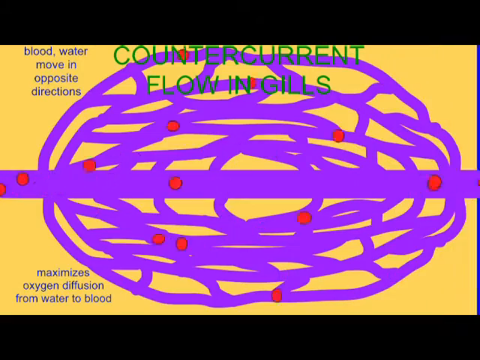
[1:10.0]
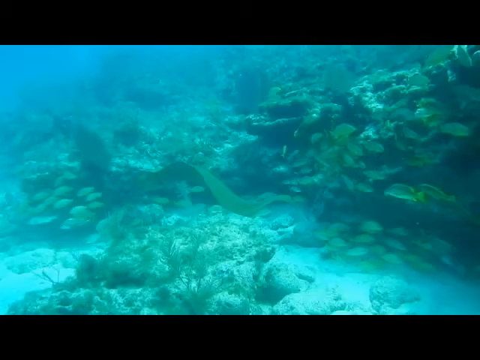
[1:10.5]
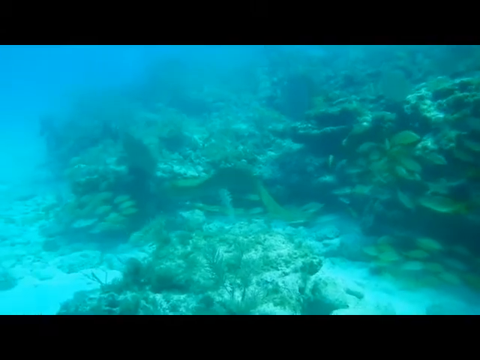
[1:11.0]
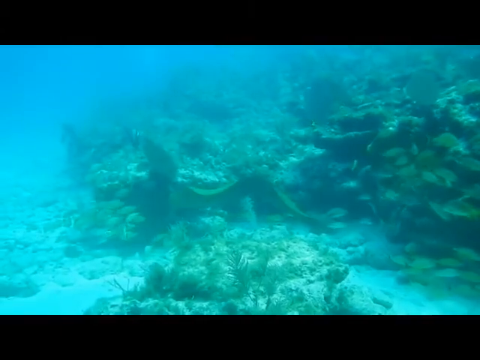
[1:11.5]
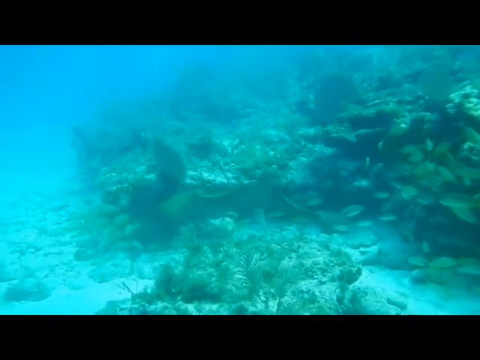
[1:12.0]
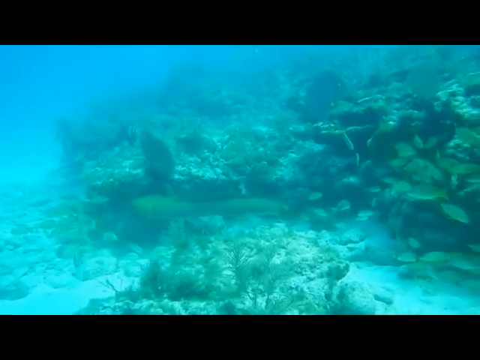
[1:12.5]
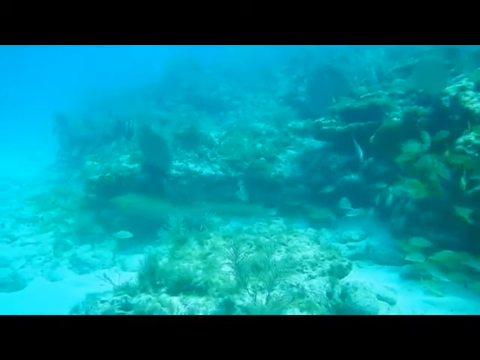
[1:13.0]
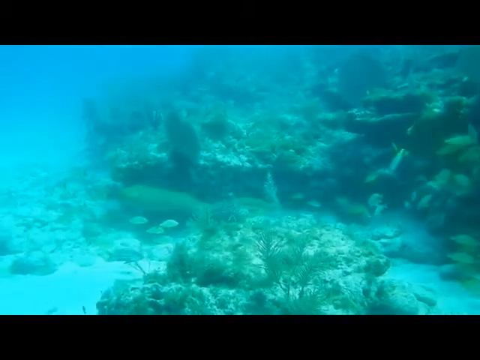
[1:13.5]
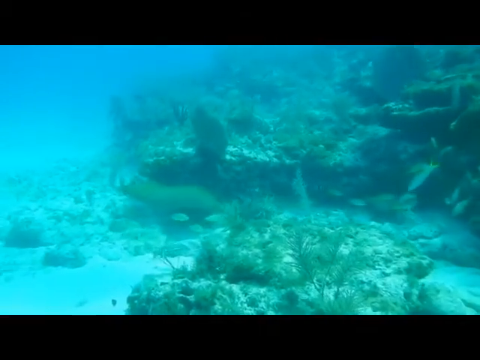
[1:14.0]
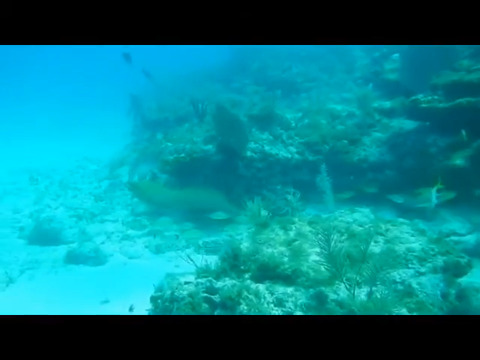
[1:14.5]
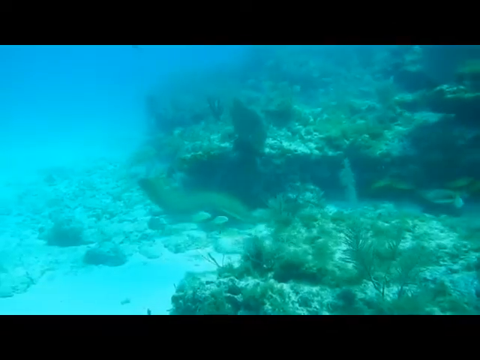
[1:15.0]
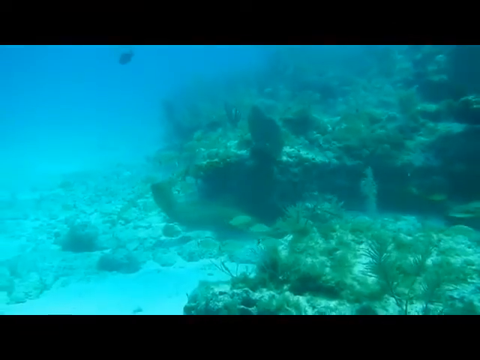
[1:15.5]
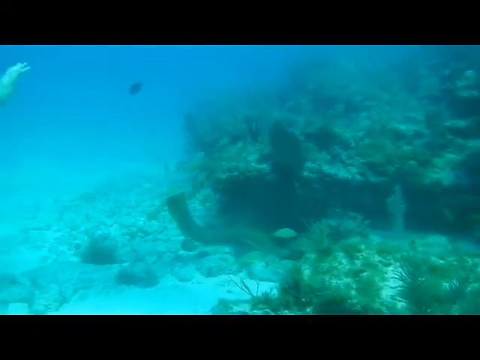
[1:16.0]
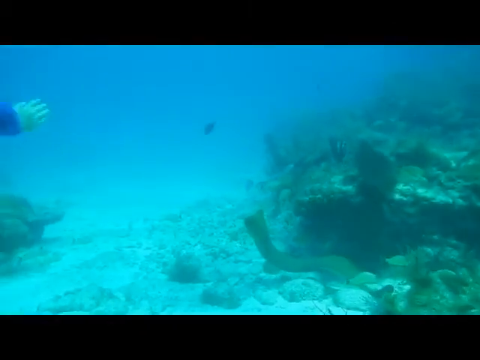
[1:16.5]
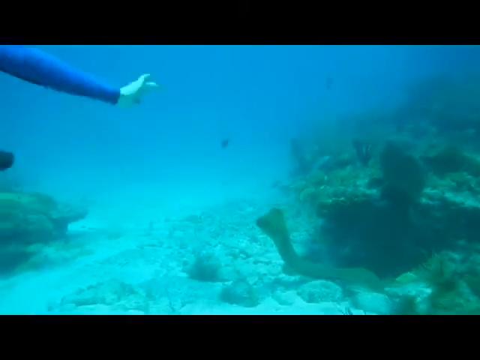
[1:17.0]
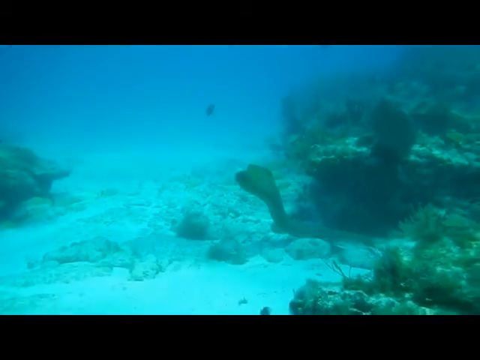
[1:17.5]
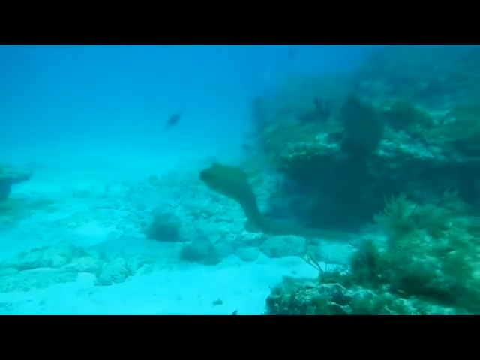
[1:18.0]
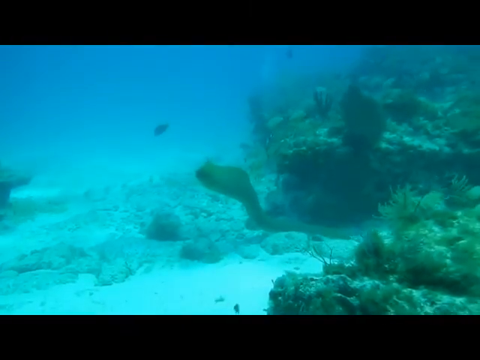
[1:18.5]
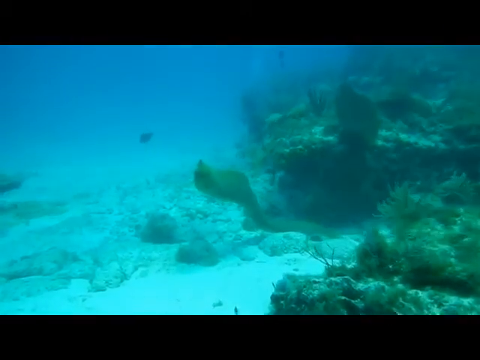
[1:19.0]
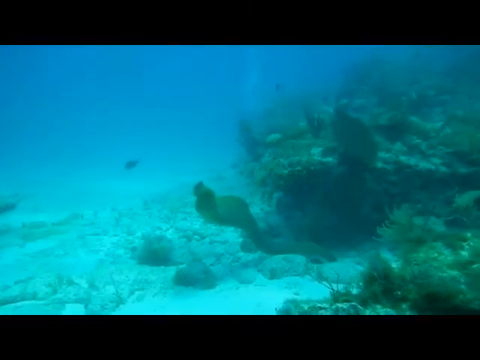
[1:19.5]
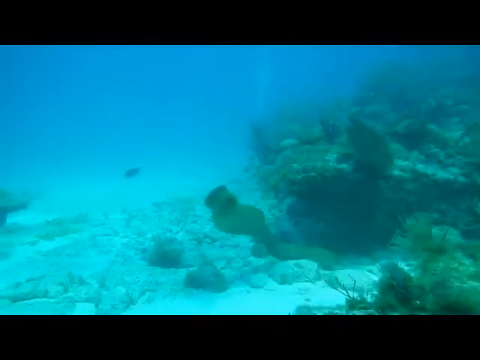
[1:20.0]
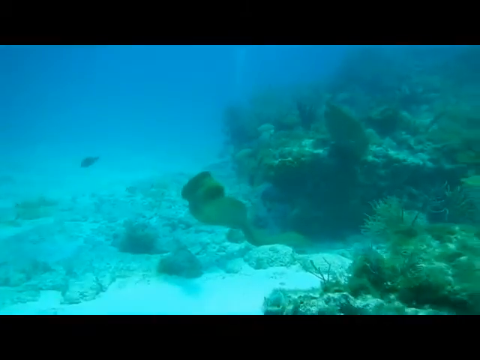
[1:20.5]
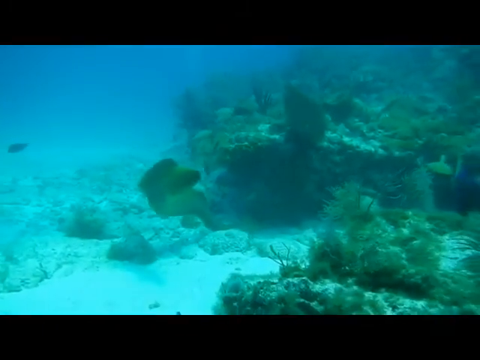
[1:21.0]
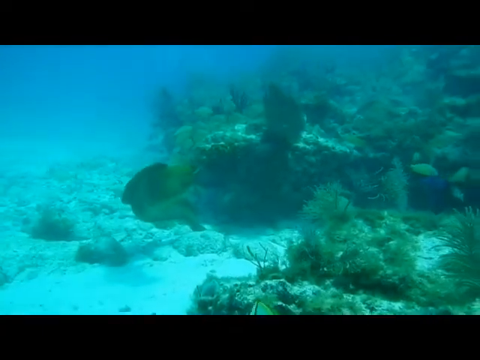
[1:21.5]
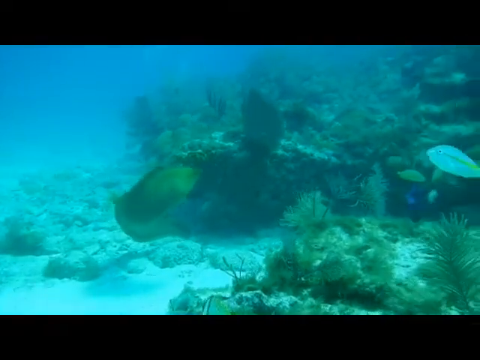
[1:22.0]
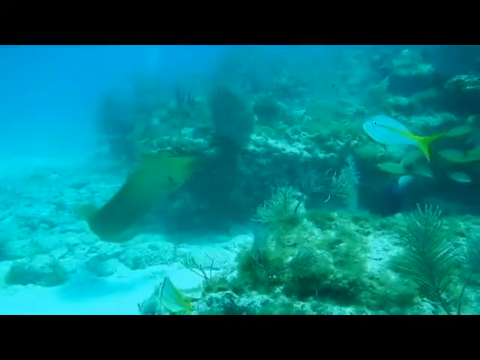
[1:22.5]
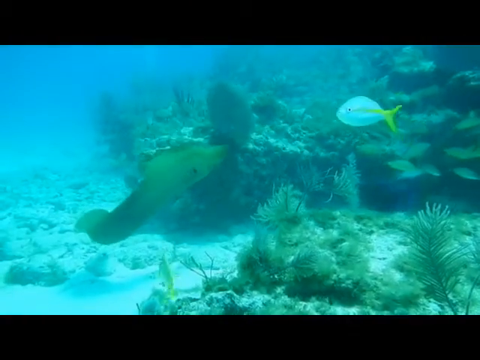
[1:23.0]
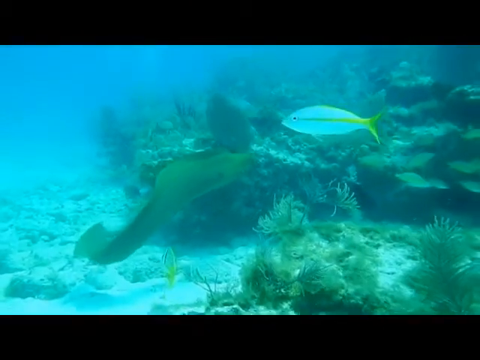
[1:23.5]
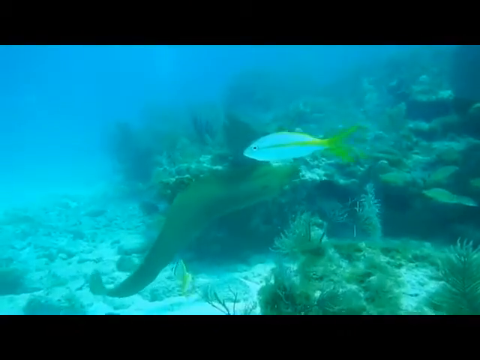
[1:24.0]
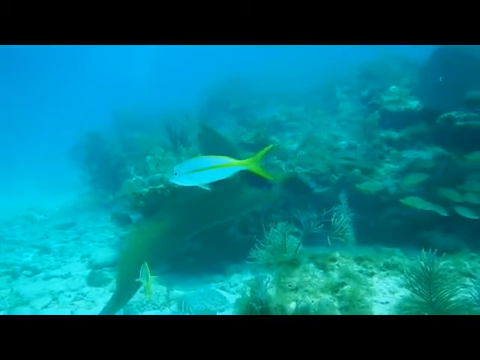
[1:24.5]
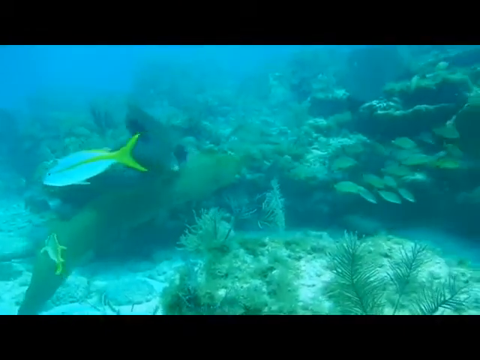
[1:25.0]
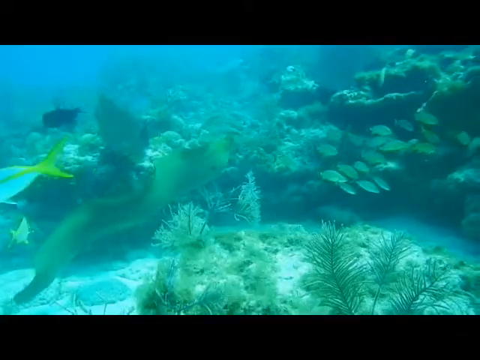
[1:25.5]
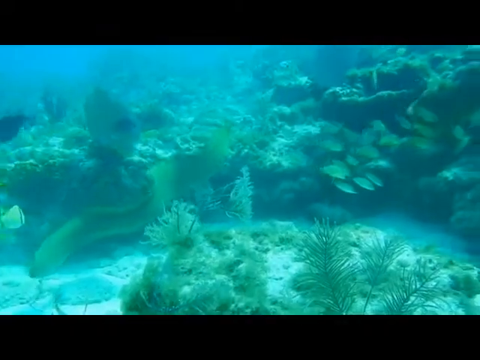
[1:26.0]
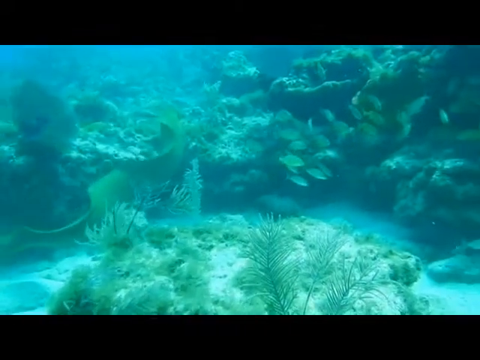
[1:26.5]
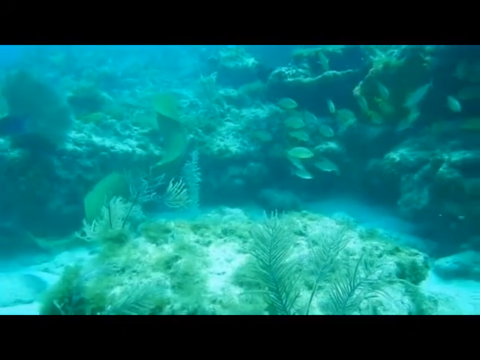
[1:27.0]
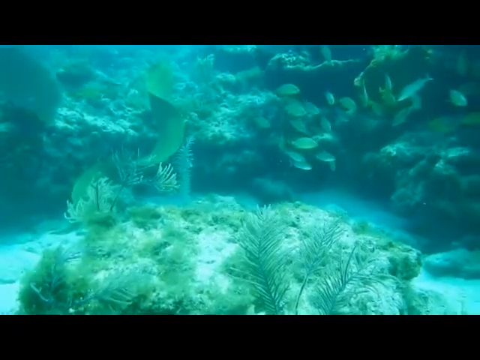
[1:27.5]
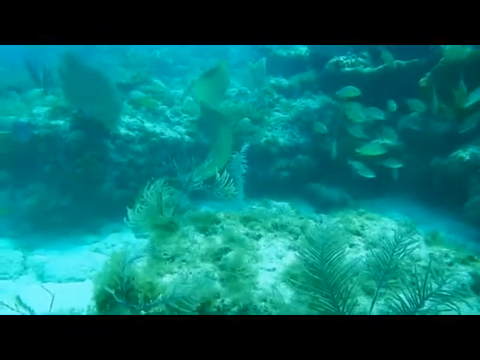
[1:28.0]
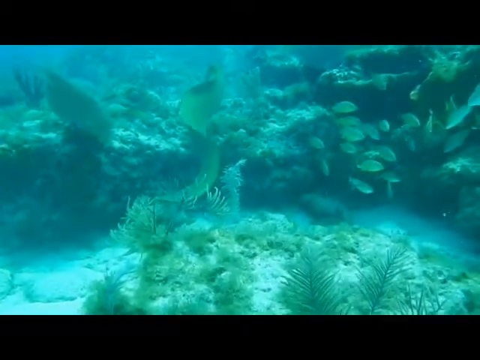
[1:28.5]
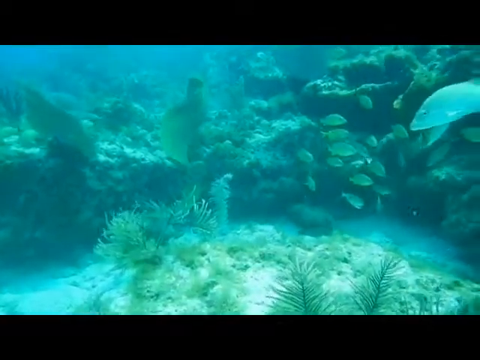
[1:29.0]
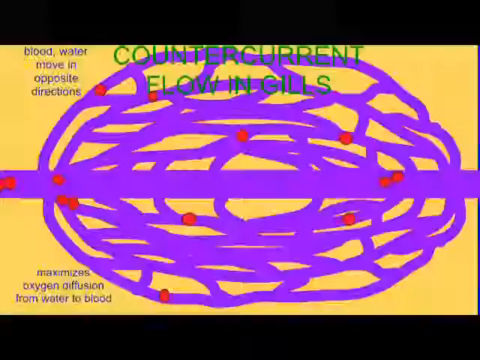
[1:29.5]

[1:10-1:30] A chart shows the countercurrent flow in the gills of a fish. Text in the bottom left corner of the screen says "maximizes oxygen diffusion from water to blood", and the top left corner says "blood, water move in opposite directions". A large purple hand-drawn diagram of the gill has a purple stripe going all the way across the screen, with red dots representing blood flow in the gill. The next screen shows the bottom of the ocean with ocean foliage and fish swimming, both small and larger fish. During this ocean floor scene, what appears to be some kind of navy fabric dips down and floats from the top left corner of the screen; it is uncertain what this object is. The screen then changes to a chart that was seen at the beginning of the video.